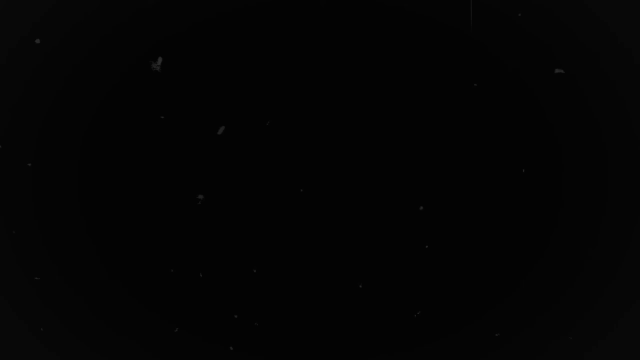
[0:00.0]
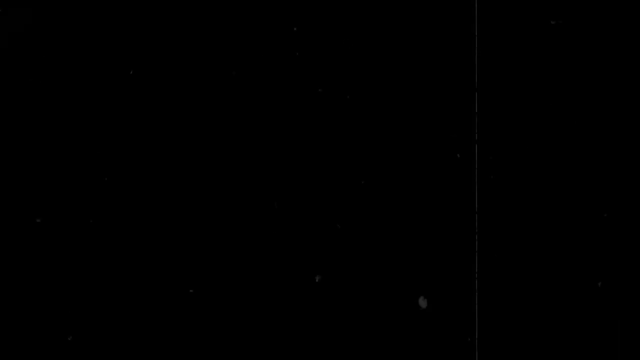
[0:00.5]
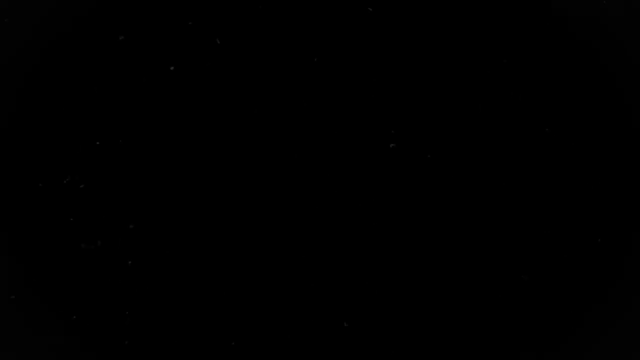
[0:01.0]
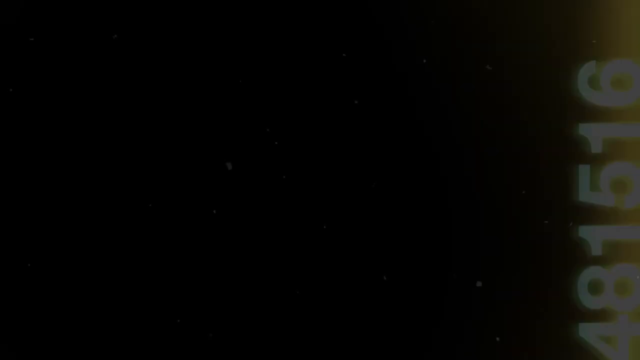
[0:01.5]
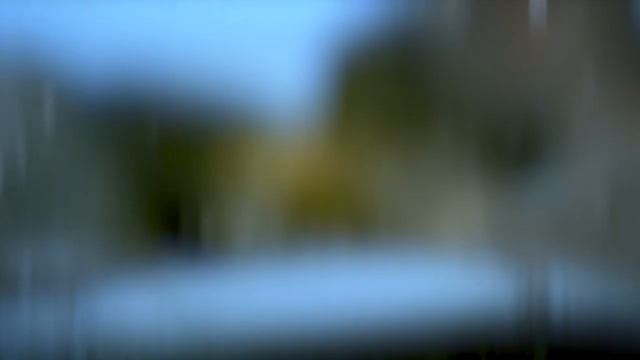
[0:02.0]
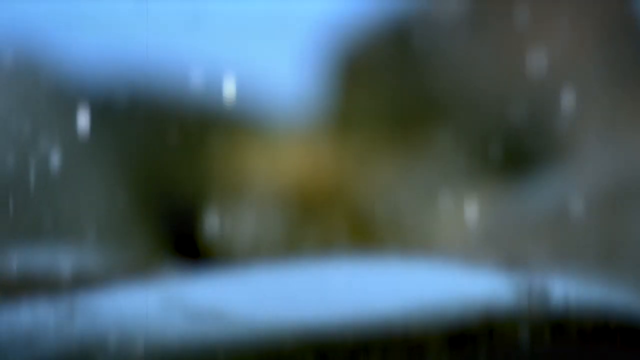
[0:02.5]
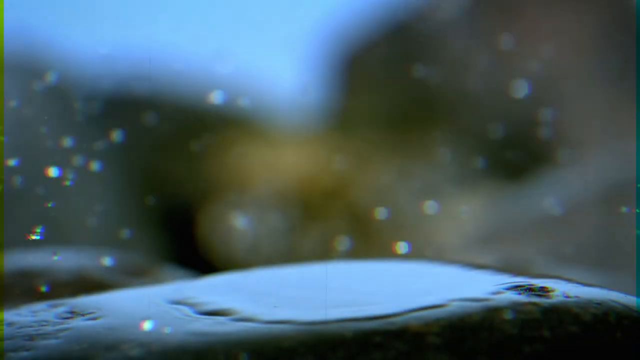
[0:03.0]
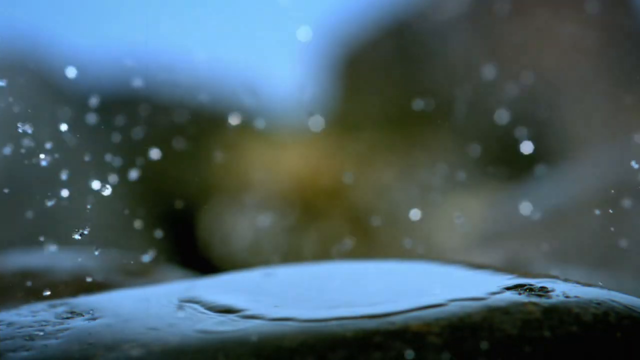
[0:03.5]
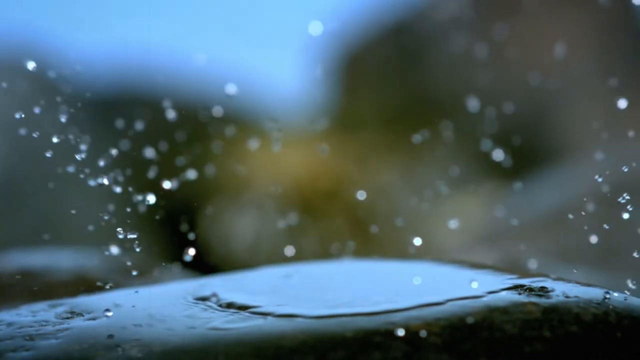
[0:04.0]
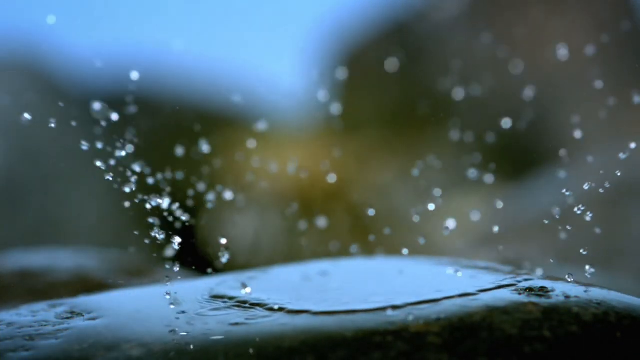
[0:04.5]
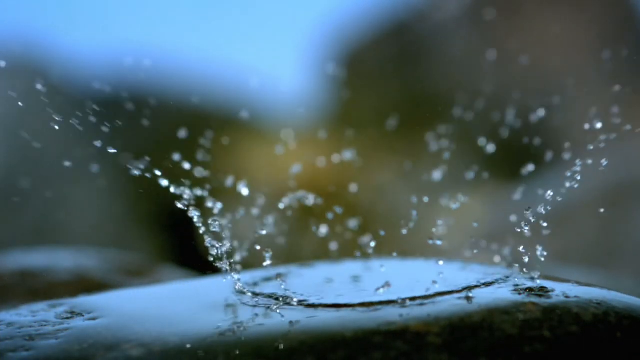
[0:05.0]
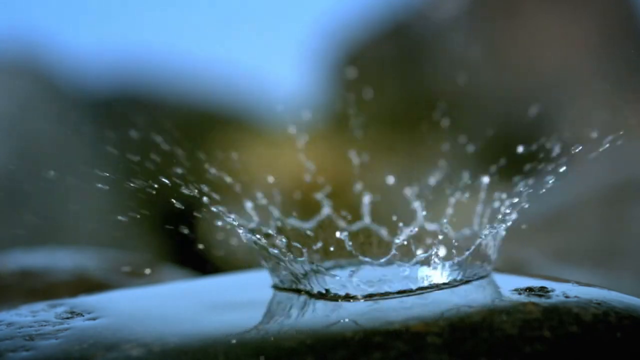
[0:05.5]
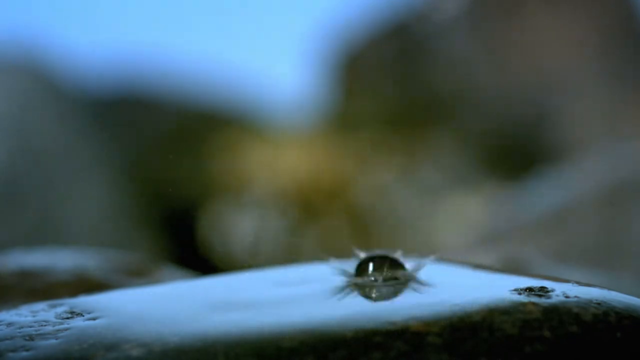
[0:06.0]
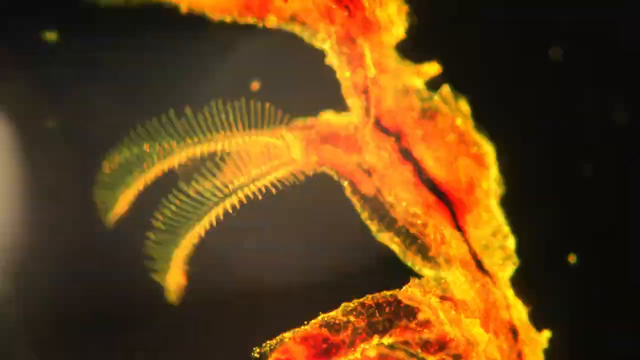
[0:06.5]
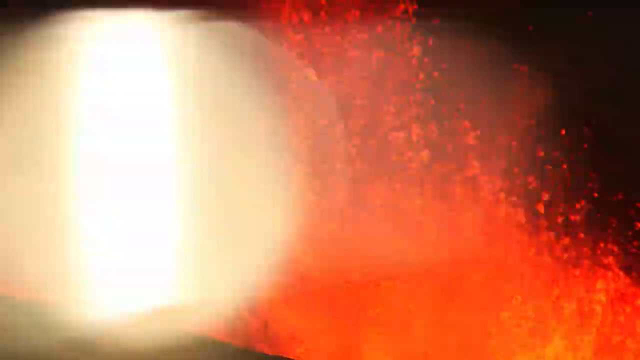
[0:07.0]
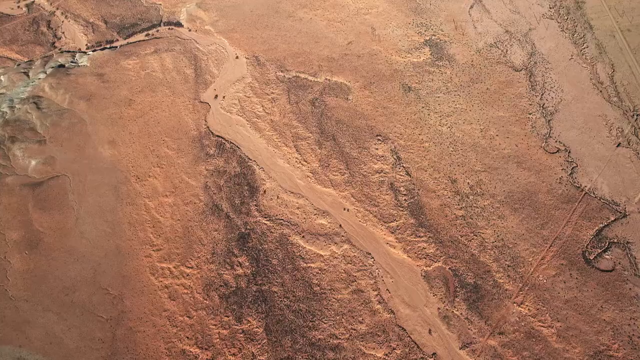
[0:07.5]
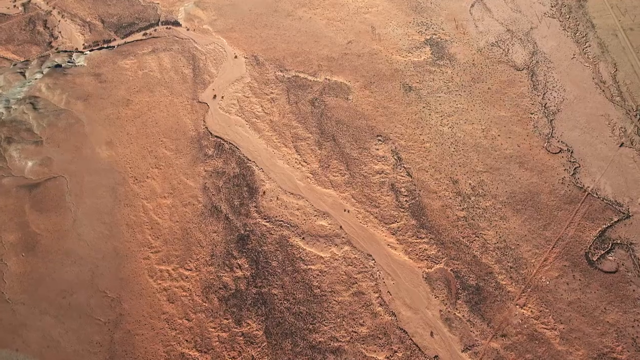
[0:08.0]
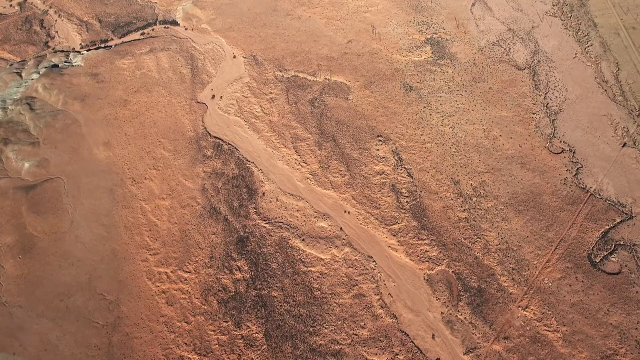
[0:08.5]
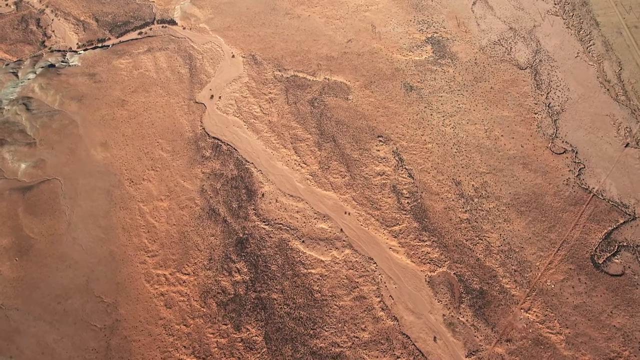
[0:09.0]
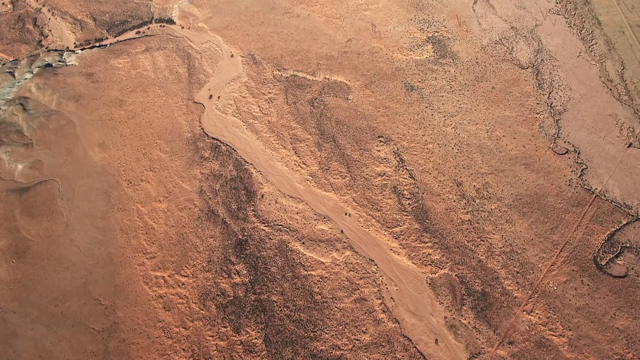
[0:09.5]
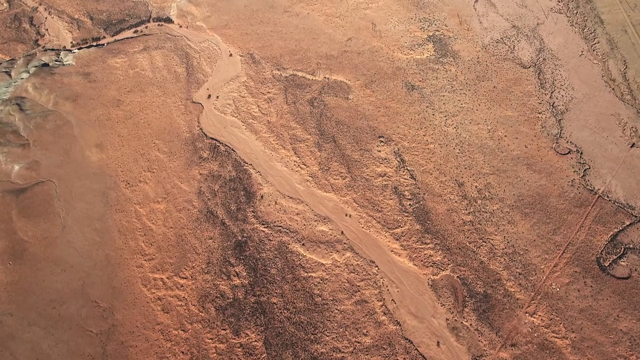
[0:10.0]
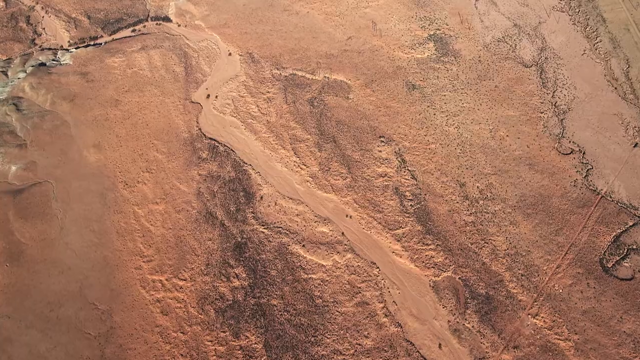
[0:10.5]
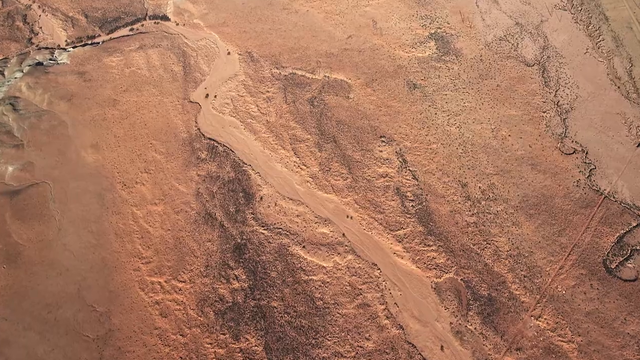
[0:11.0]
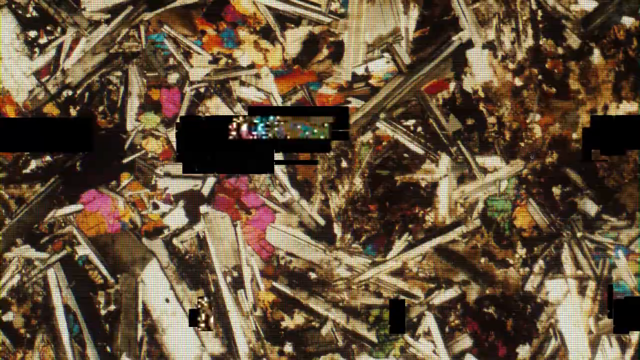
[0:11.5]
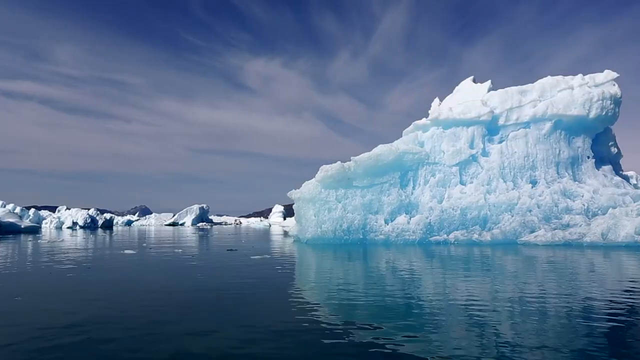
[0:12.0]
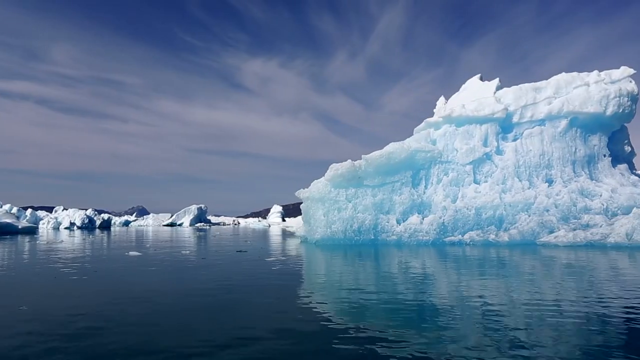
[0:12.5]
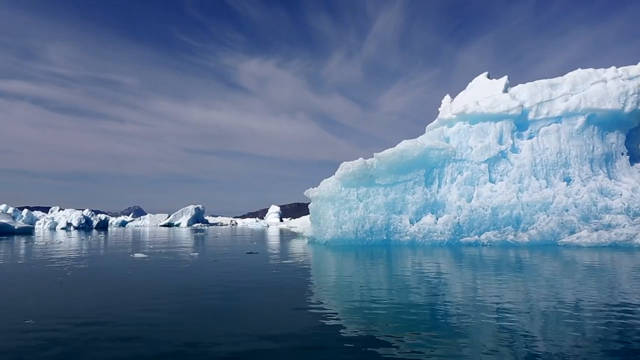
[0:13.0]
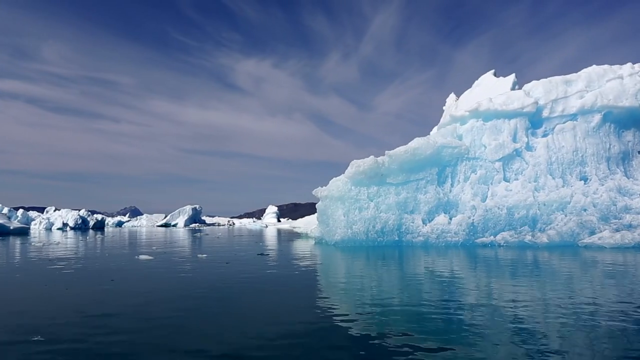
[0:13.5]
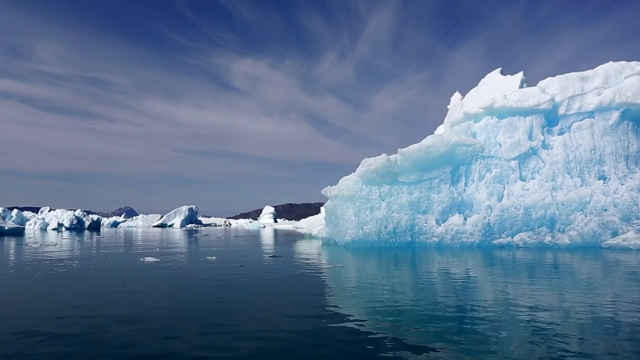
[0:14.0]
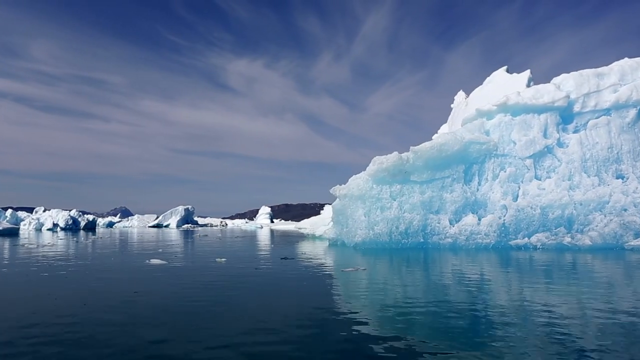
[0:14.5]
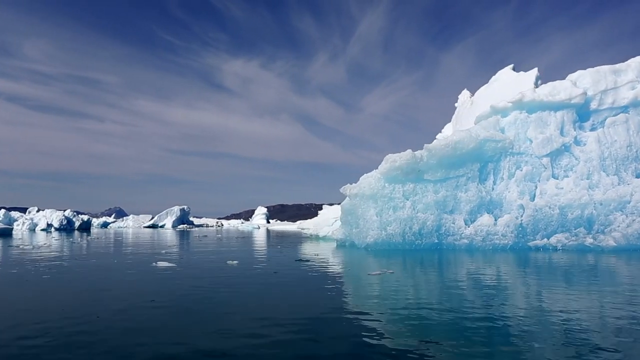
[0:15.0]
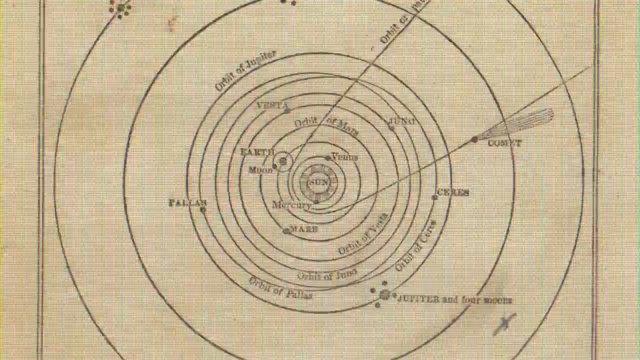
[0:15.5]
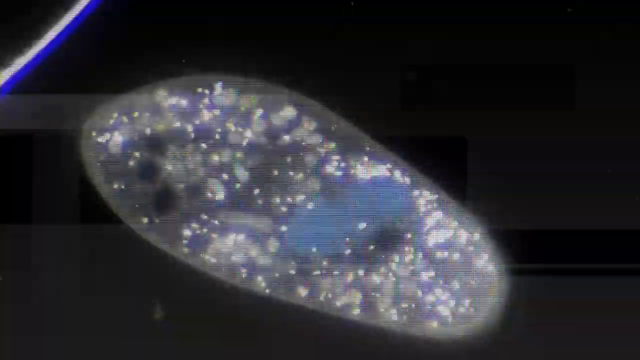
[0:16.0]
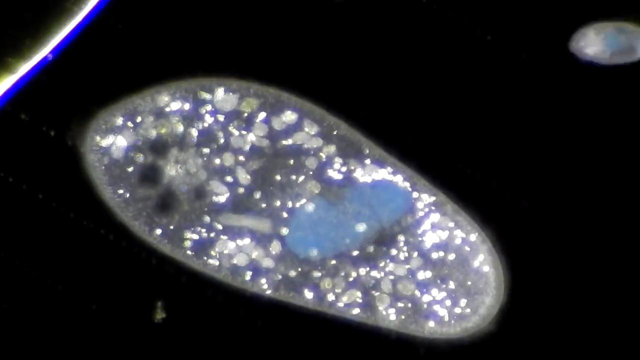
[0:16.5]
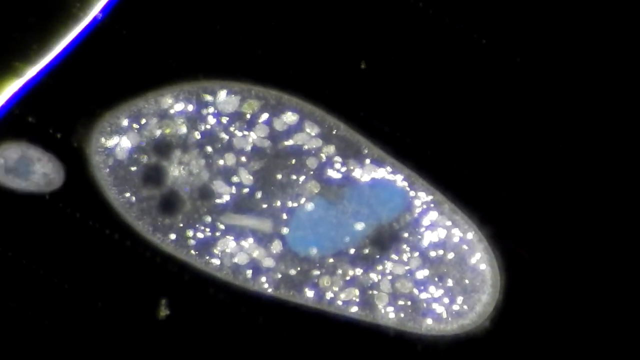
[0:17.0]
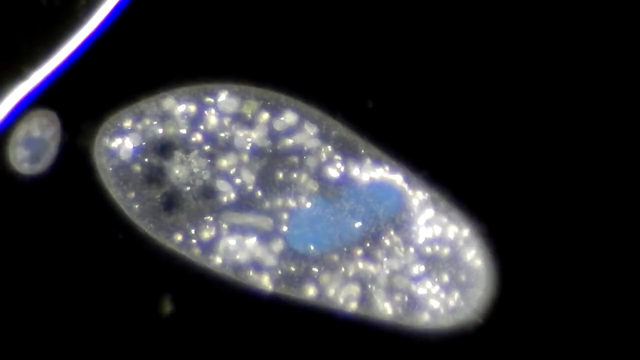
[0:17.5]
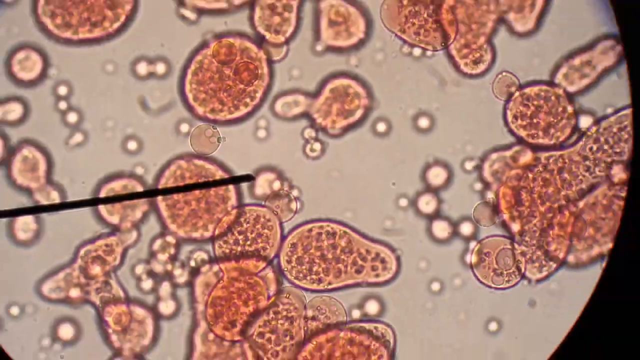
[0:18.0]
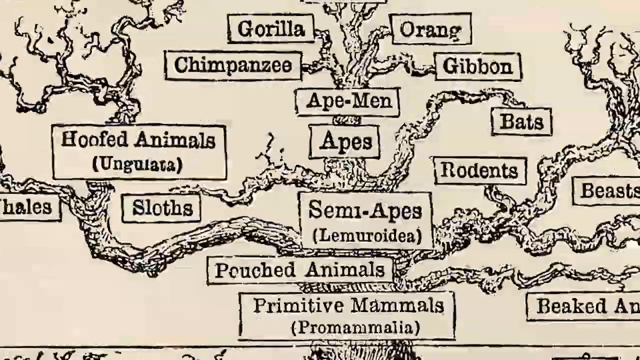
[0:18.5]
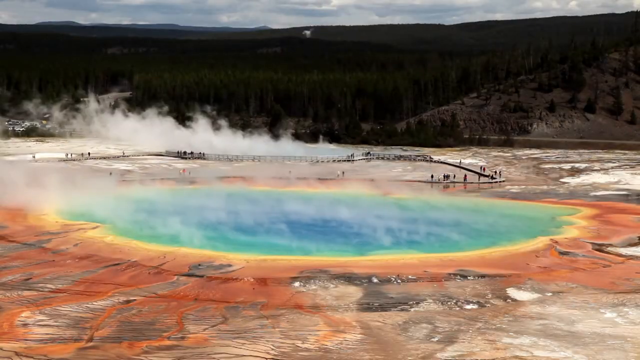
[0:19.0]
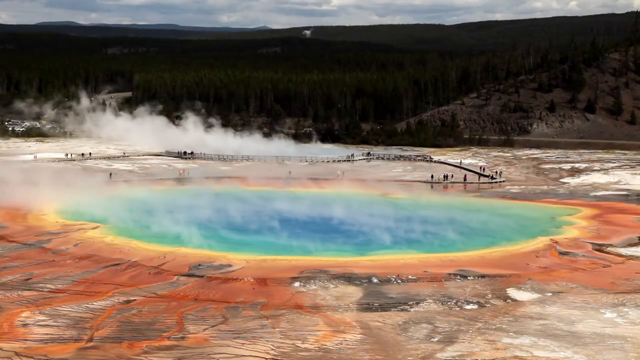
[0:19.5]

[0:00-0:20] A bit of computer graphic animation throws the image onto the screen, and then what looks like some kind of glitter or glass breaking appears. A drop of water goes backwards in slow motion, forming a splash of water. A whole bunch of scenes then appear very quickly, followed by a glacier out in what looks like Antarctica, out in the ocean; a camera zooms across the bottom of the water, and a very large glacier is visible. Another series of scenes goes by very quickly, and when it slows down there seems to be some kind of cell or amoeba. After more quick scenes, there is an image of a gigantic hole in the earth with some kind of track in the background and some forest and clouds in the back as well, and smoke comes out of the hole. The scene then changes to an erupting volcano.